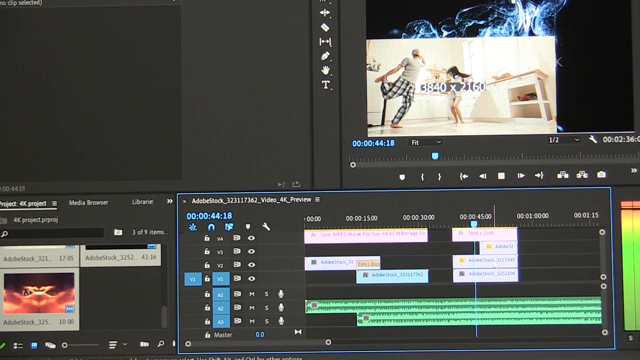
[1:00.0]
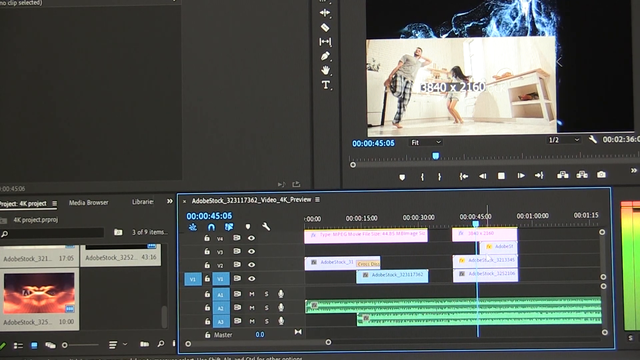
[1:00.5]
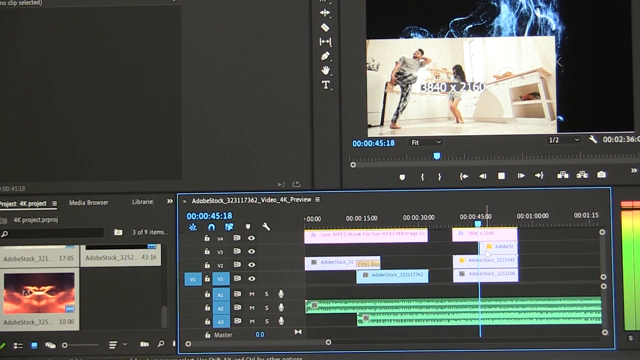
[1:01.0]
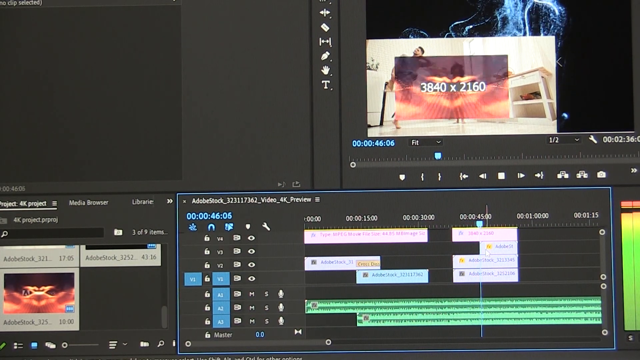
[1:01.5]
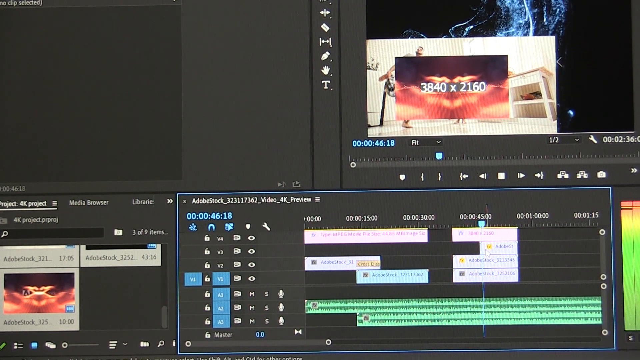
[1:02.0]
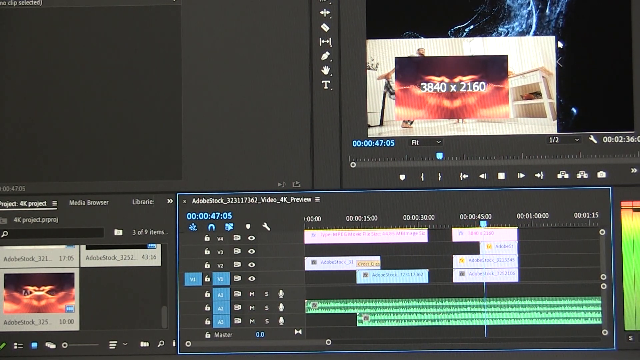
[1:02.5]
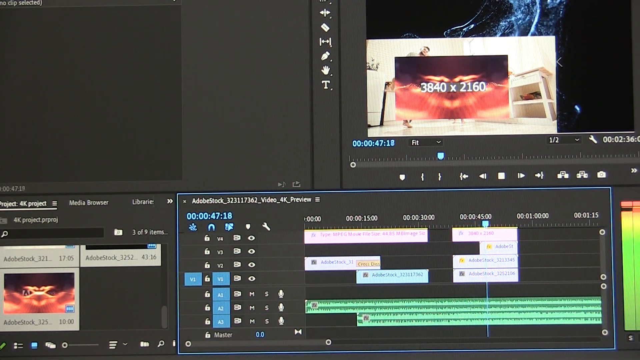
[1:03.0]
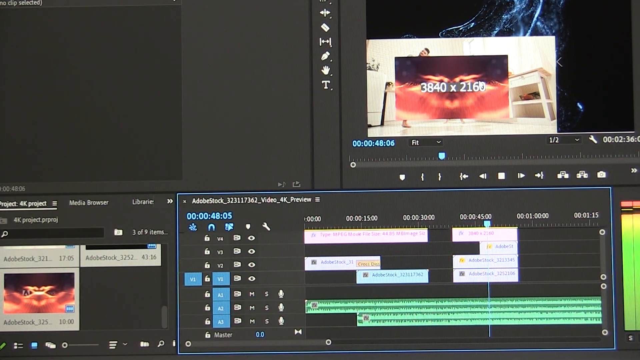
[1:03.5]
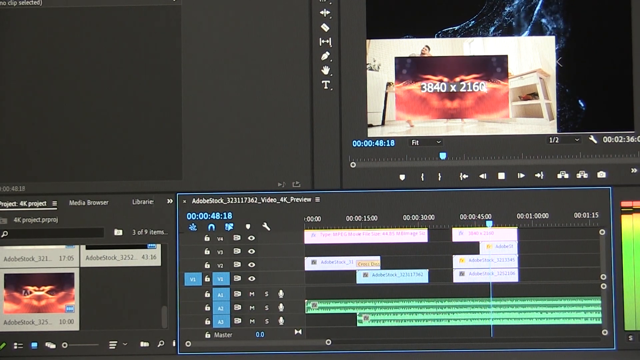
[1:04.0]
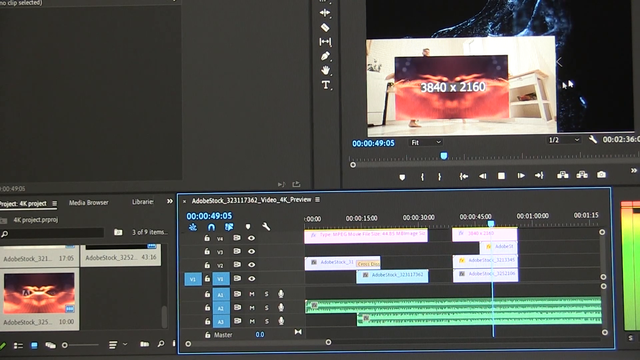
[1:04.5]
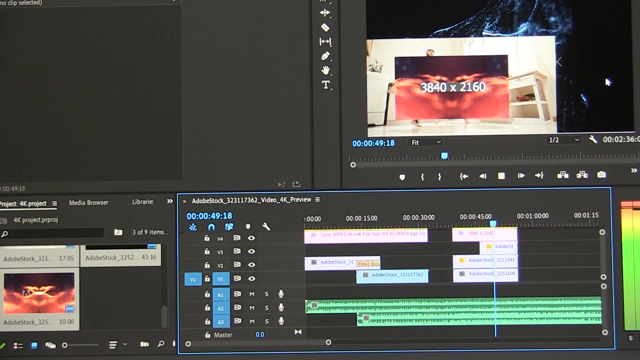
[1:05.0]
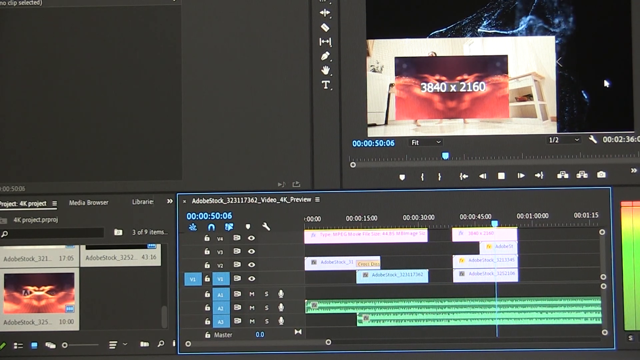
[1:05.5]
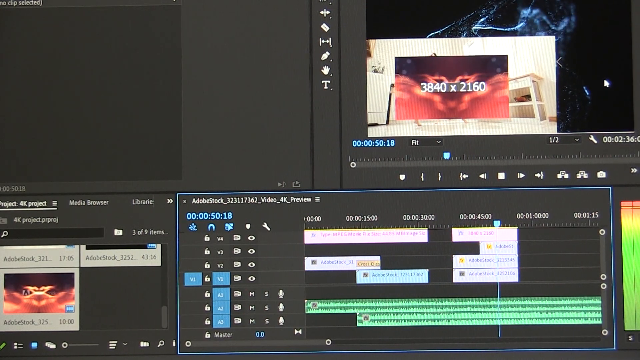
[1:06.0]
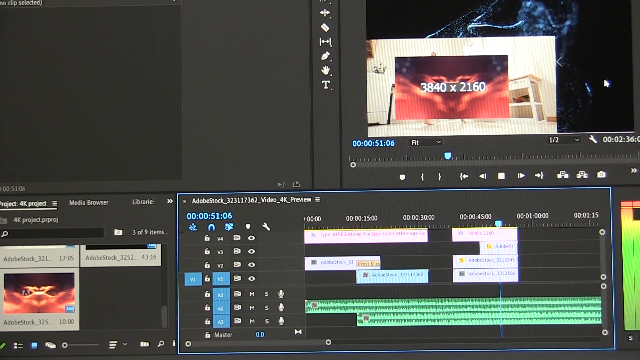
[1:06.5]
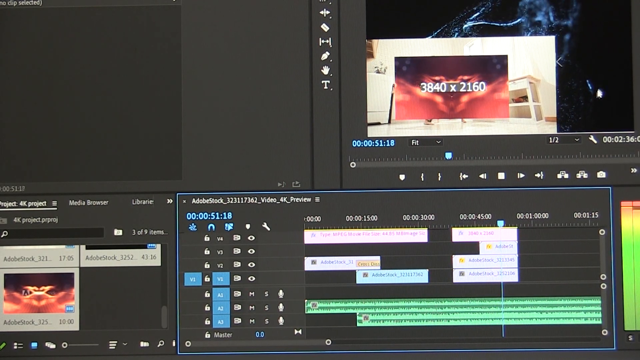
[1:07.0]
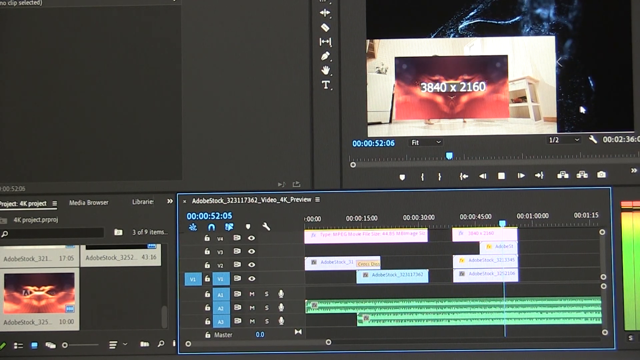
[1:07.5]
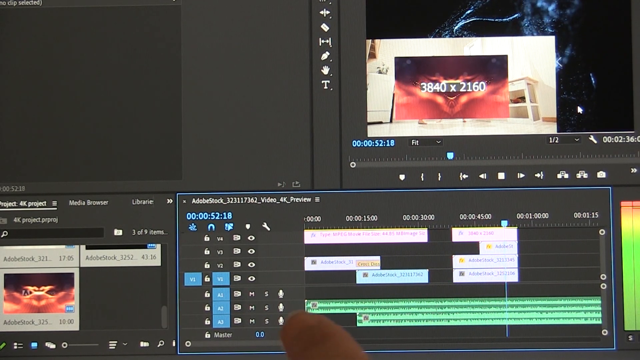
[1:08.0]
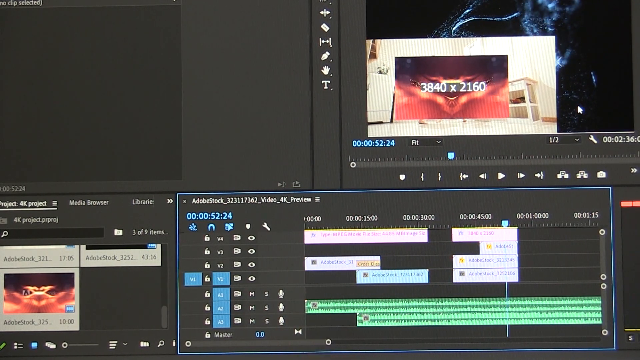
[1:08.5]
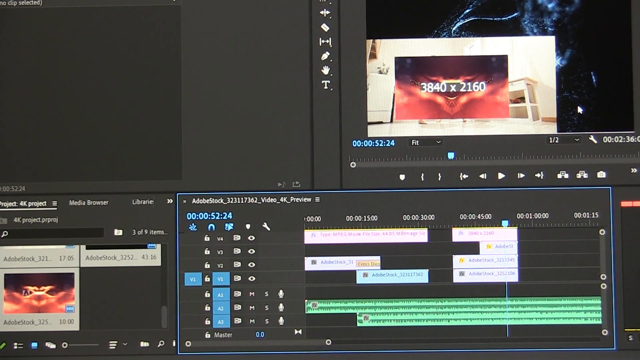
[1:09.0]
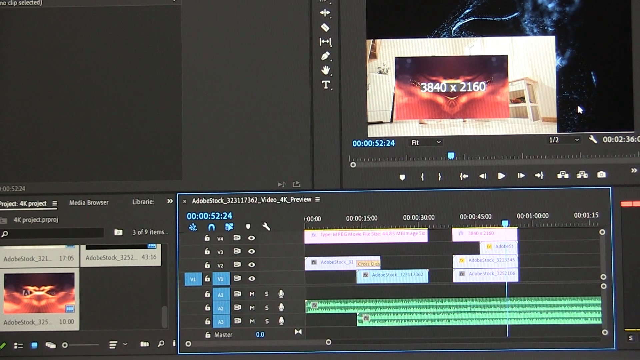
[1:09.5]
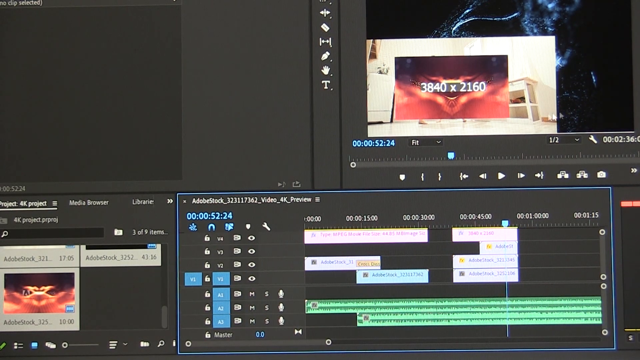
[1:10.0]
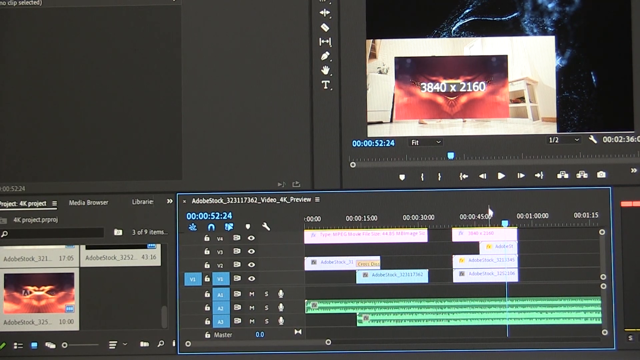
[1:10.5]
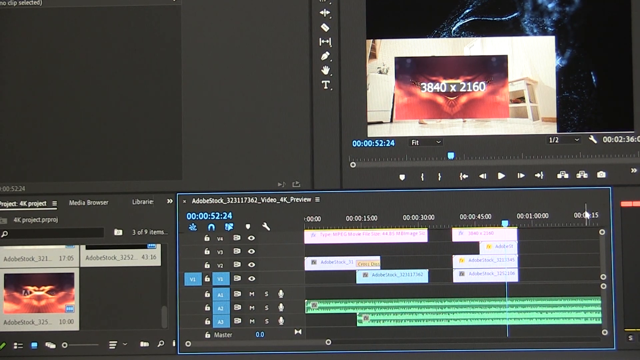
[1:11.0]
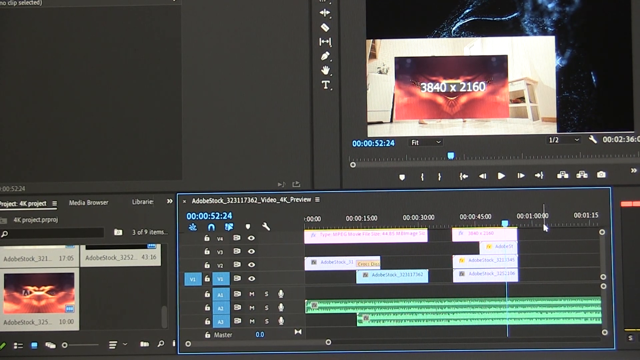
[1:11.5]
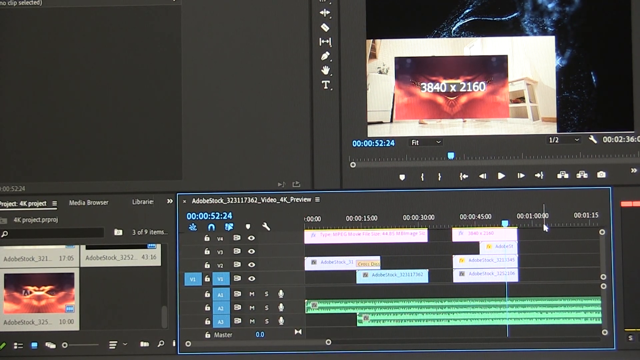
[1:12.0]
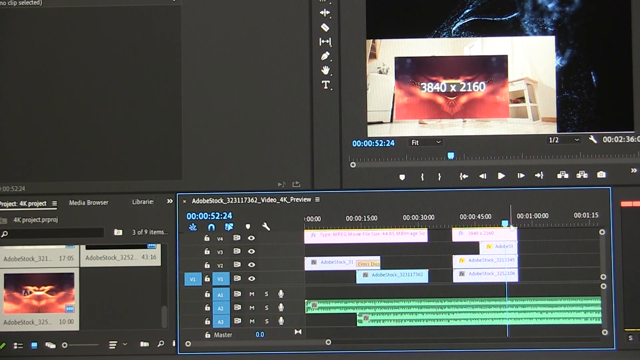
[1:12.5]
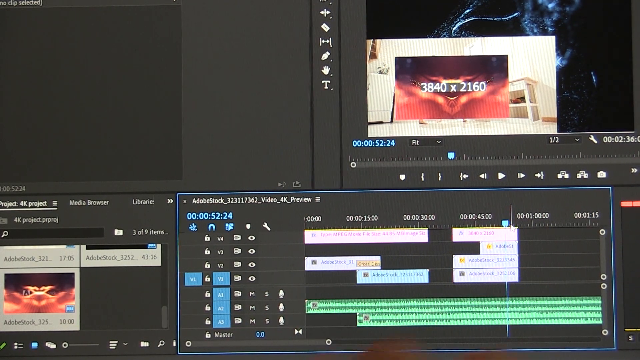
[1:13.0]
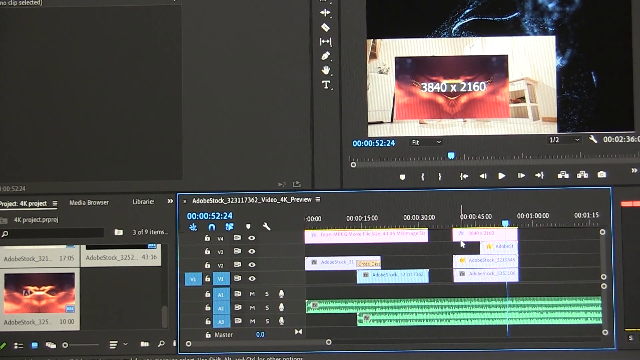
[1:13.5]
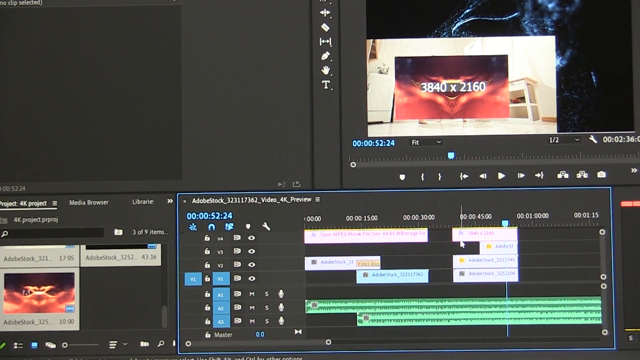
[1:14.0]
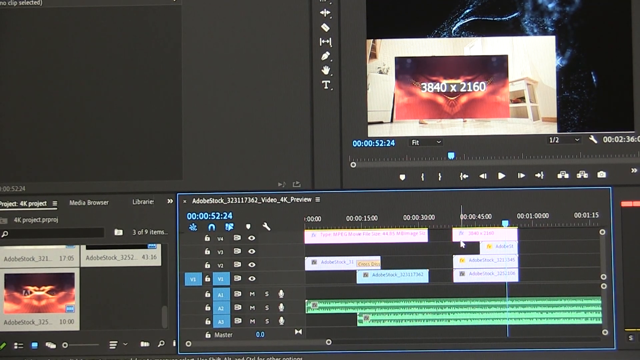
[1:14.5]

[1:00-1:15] The sequence continues as a file or image is placed on top of the original footage of the people dancing. Playback tools are visible, including stop, forward and other tools, along with track labels V2 and A, the A column apparently for audio and the V column for video. There is also a text tool and what is apparently a blade tool for cutting.